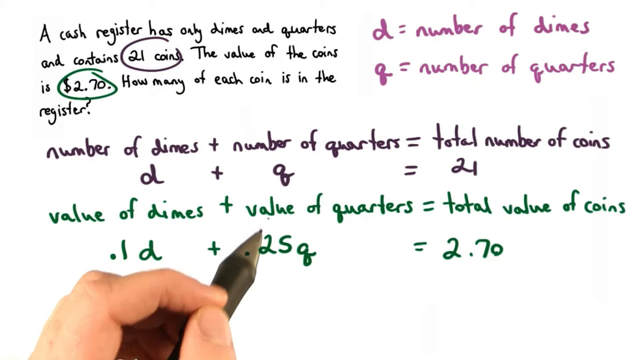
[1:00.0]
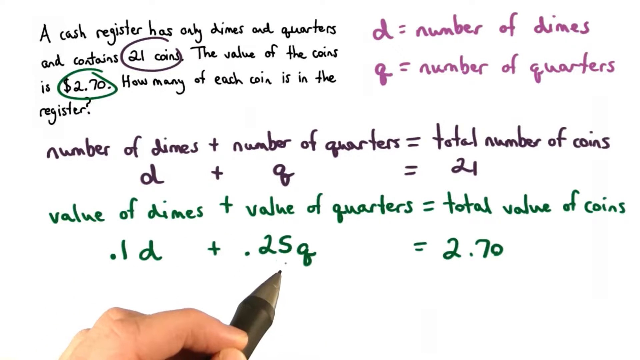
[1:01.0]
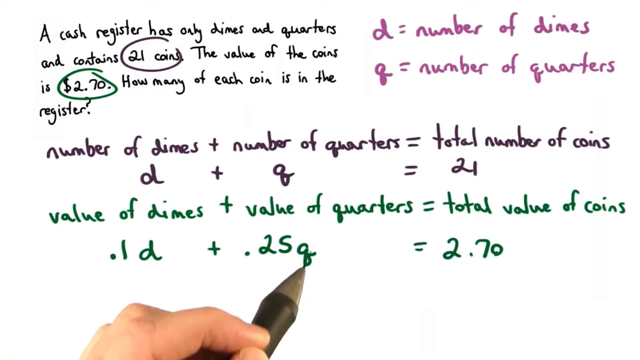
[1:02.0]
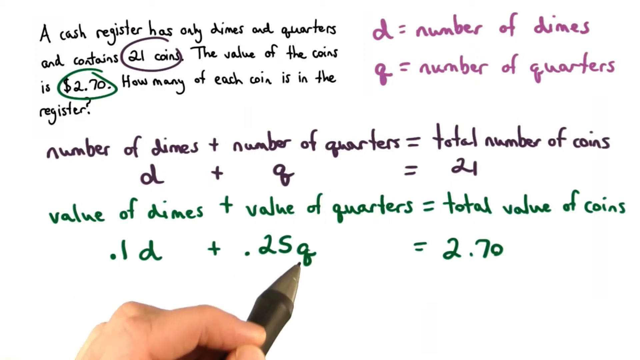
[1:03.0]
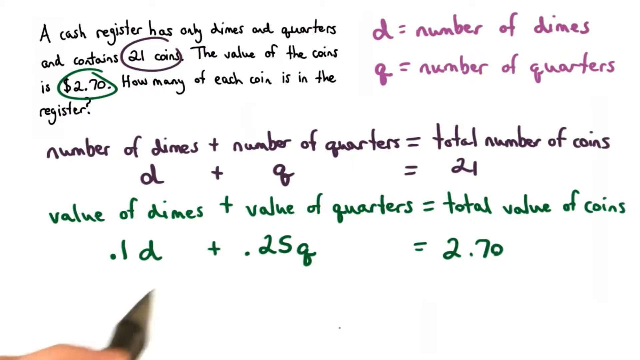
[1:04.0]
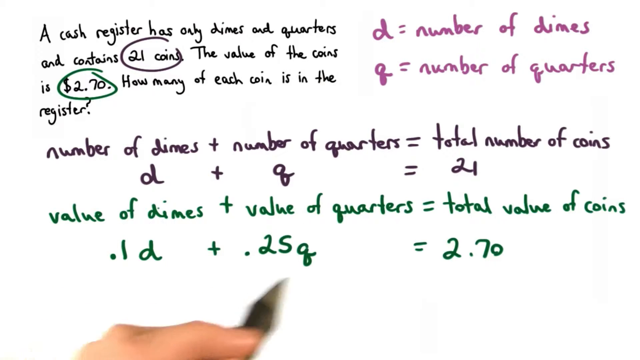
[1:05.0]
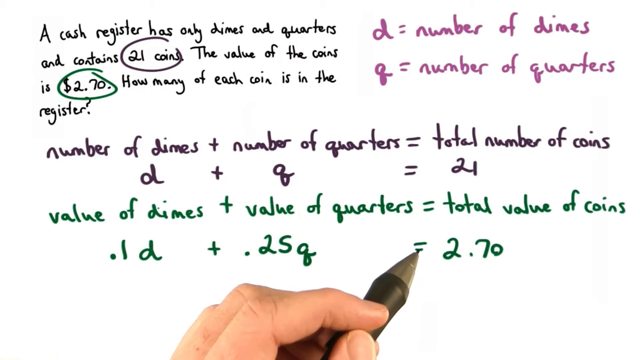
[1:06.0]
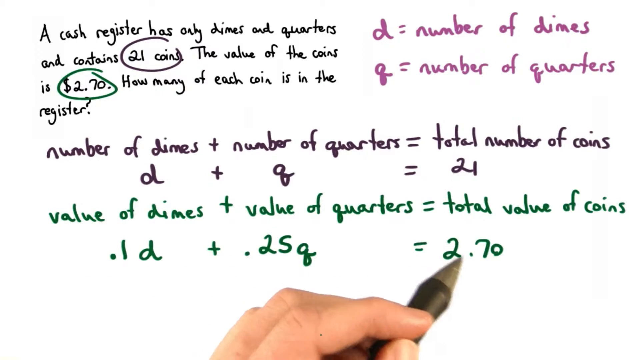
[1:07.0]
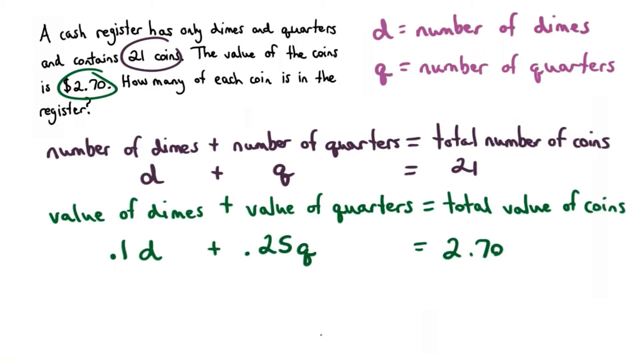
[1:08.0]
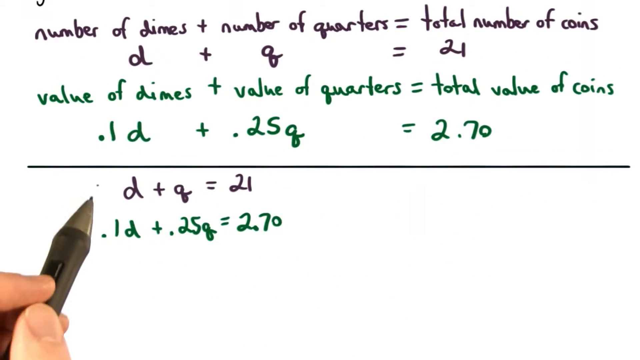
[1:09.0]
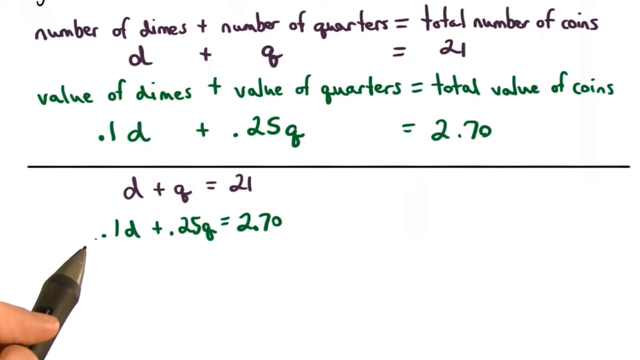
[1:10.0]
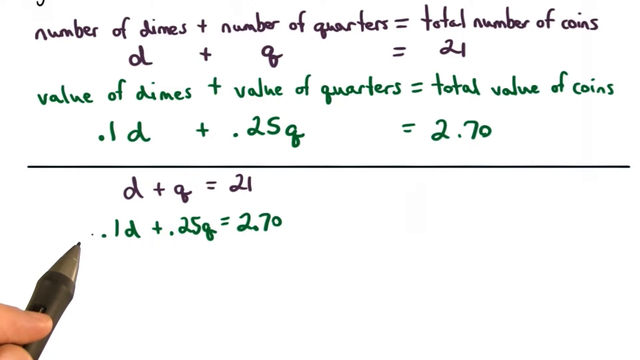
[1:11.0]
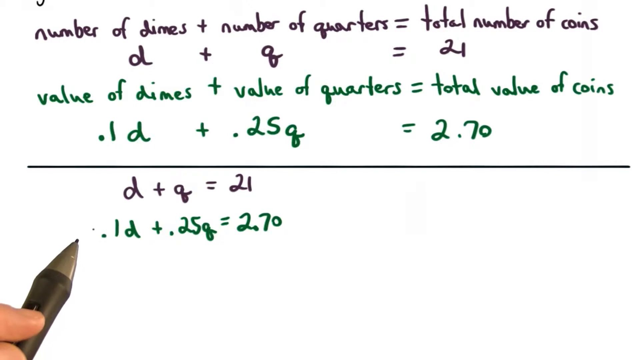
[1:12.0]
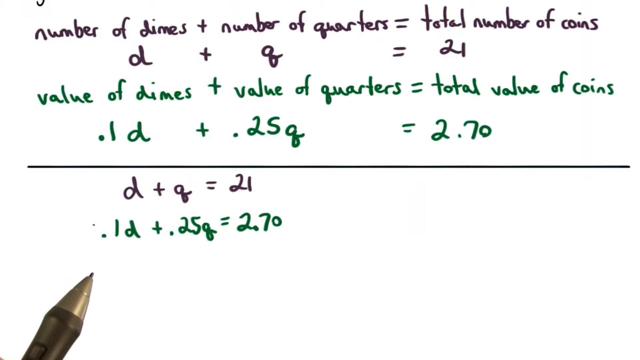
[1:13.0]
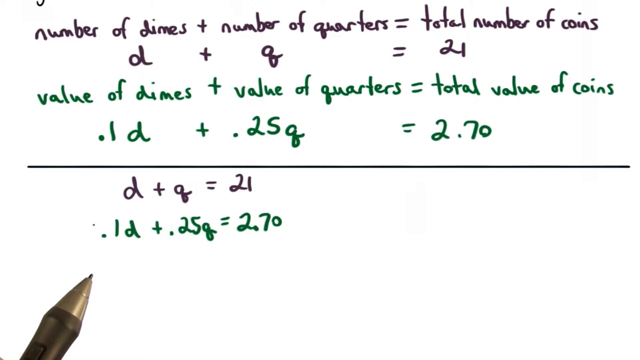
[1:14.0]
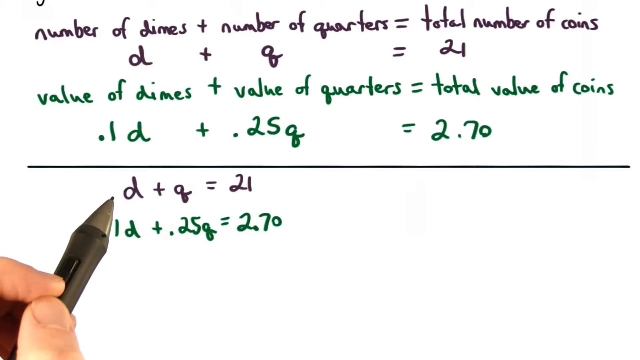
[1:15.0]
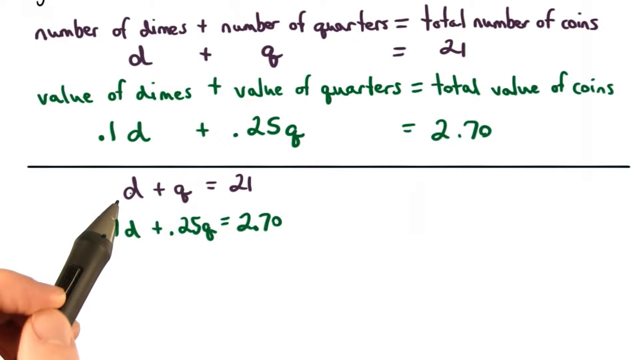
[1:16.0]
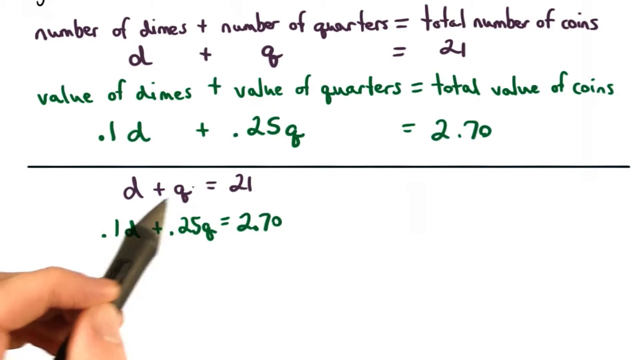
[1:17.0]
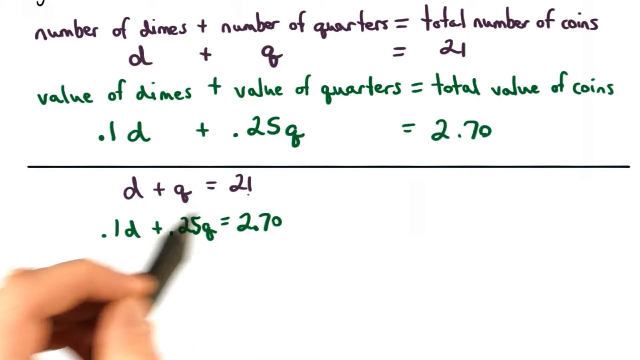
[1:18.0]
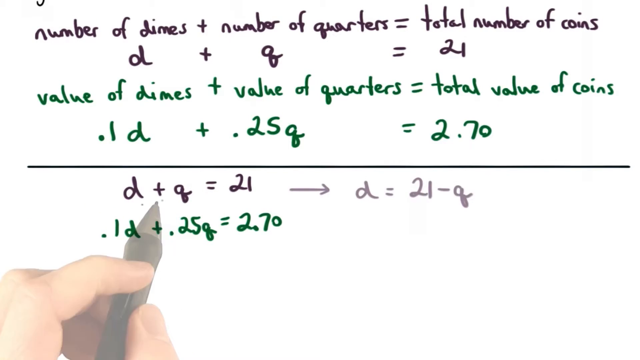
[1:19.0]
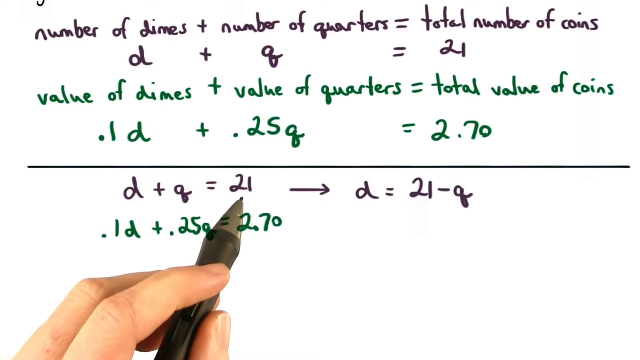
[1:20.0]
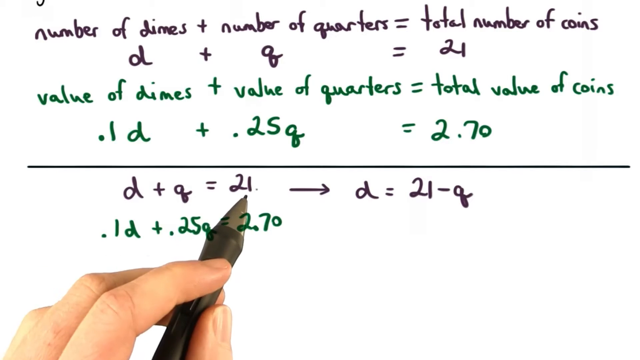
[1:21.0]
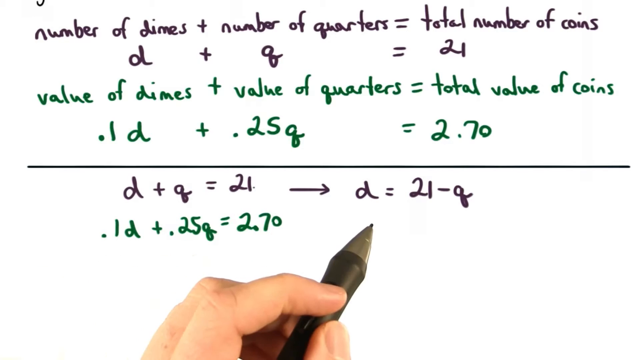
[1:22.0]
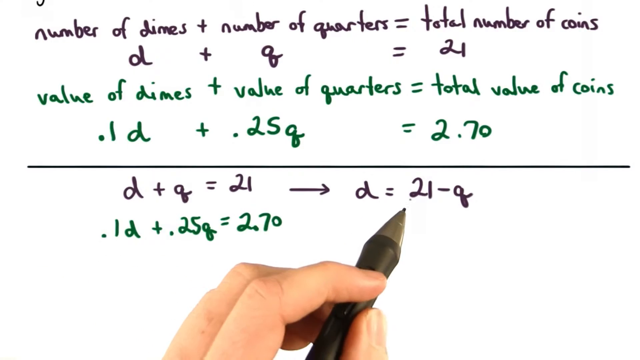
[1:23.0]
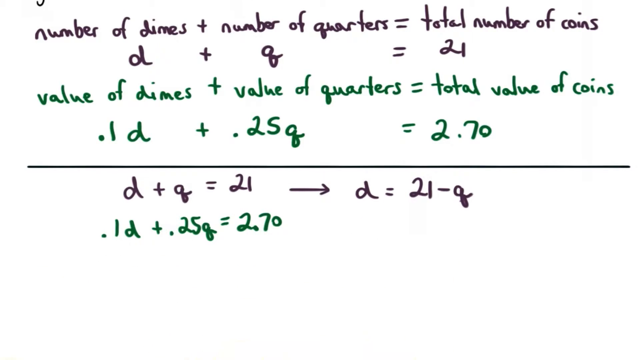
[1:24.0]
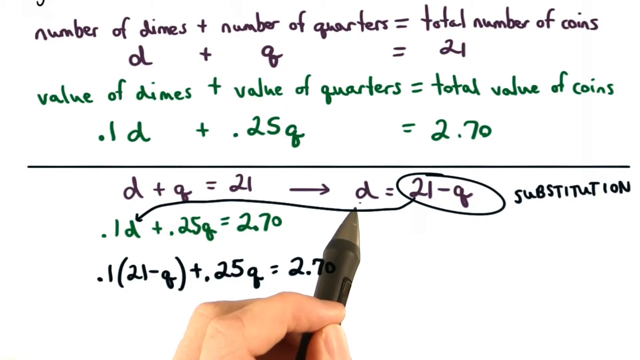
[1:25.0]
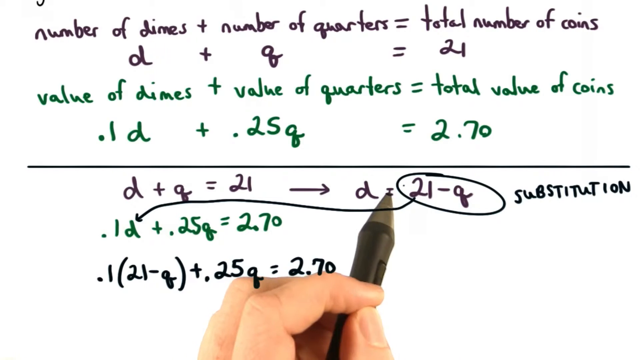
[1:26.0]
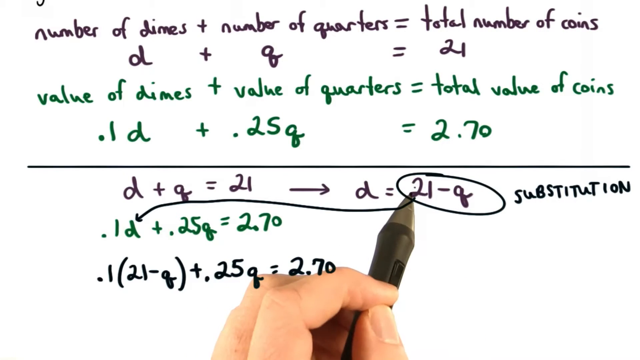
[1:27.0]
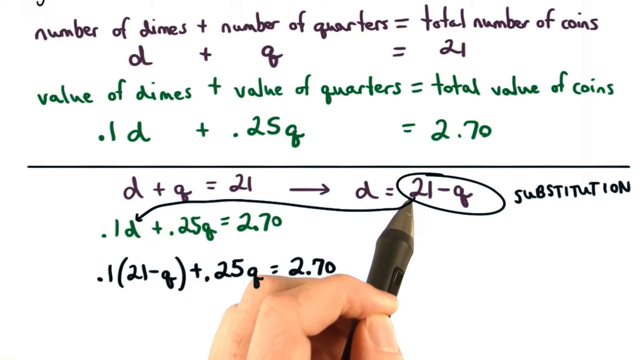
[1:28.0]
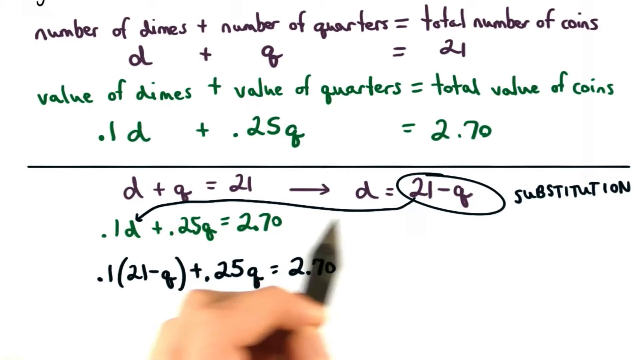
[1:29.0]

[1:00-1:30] The same screen is shown. In the upper left quadrant, in black handwritten-style text, it says "a cash register has only dimes and quarters and contains 21 coins. The value of the coins is $2.70. How many of each coin is in the register?" "21 coins" is circled in black and "$2.70" is circled in green. In the upper right quadrant in purple are "d = number of dimes" and "q = number of quarters". Beneath that in black is "number of dimes + number of quarters = total number of coins", rewritten on the line below as "d + q = 21". Beneath that in green is "value of dimes + value of quarters = total value of coins", and beneath that "0.1d + 0.25q = 2.70". The pen is in frame from the bottom left along with part of the hand, held mainly by the forefinger and thumb, pointing at the 0.25q. It makes an underlining motion under the q, circle motions around the 0.1d and the 0.25q, moves up to "value of quarters" and across it, then points to the 2.70. The screen changes: the earlier equations now occupy the upper half of the screen, divided by a horizontal black line from simpler rewritten versions below in black, "d + q = 21" and "0.1d + 0.25q = 2.70". The pen, in the bottom left of the frame, points at the 0.1d, makes an up-and-down motion across those two lines, then moves beneath and around them, emphasizing the d and the q, and circles "d + q = 21". An arrow pointing right is drawn from the 21, followed by "d = 21 - q". The pen makes an underlining motion under the 21, then under the new equation. "21 - q" is circled, and the pen makes a circular motion around it for emphasis. The word "SUBSTITUTION" is written in capitals in black next to the circle, and an arrow runs from the circle down to the 0.1d. On the line beneath appears a new equation, "0.1(21 - q) + 0.25q = 2.70", and the pen moves to emphasize it.